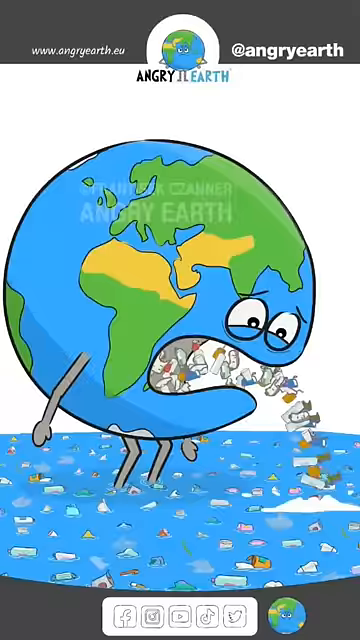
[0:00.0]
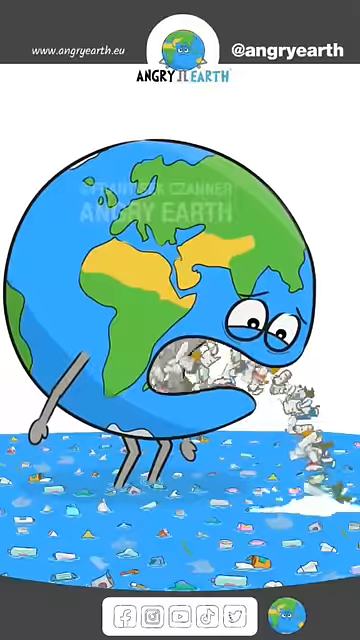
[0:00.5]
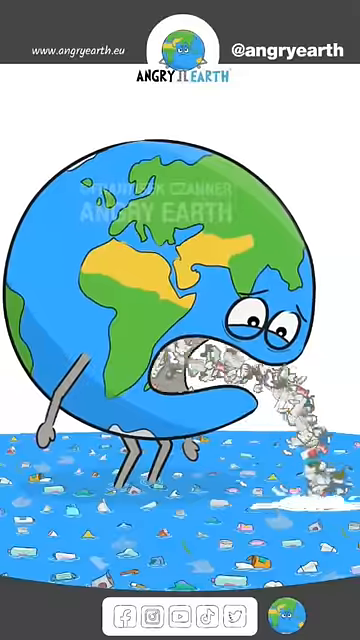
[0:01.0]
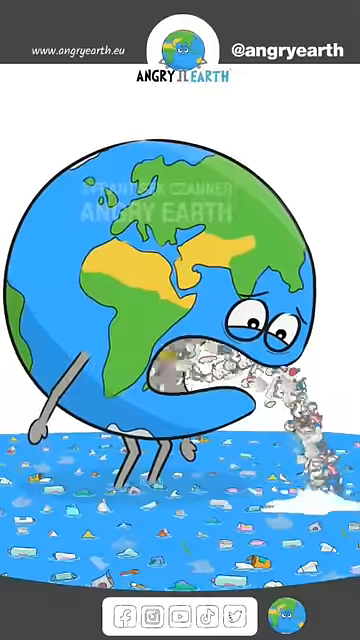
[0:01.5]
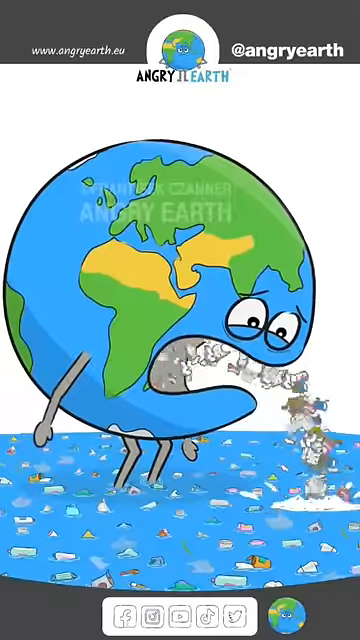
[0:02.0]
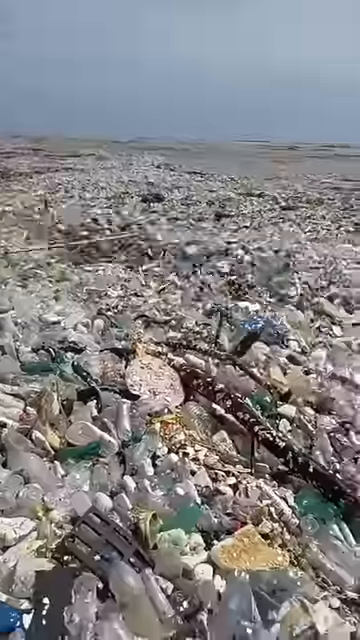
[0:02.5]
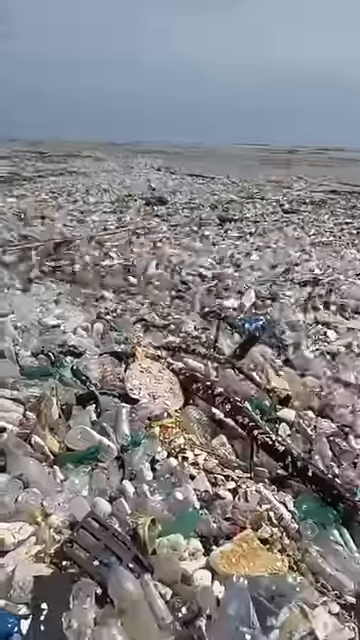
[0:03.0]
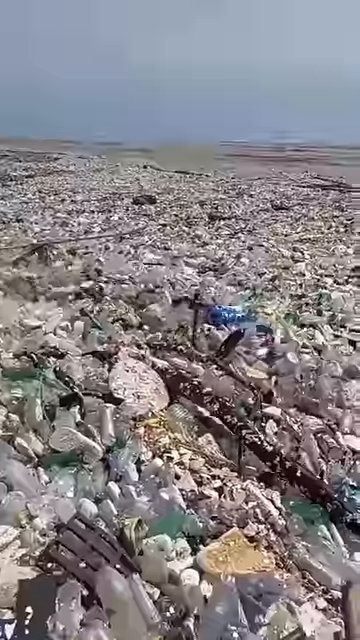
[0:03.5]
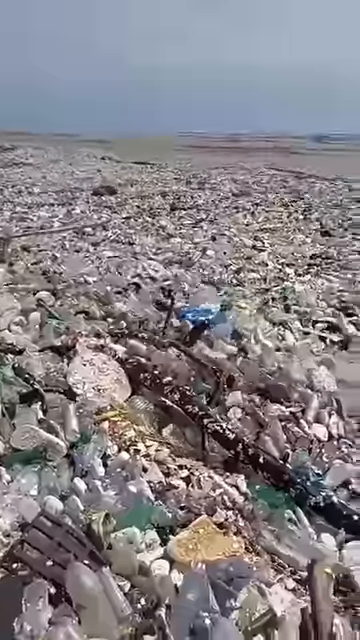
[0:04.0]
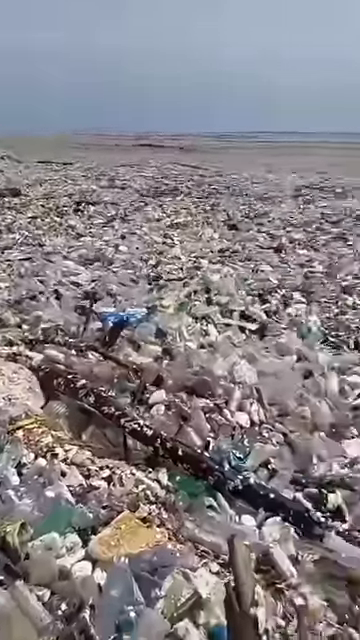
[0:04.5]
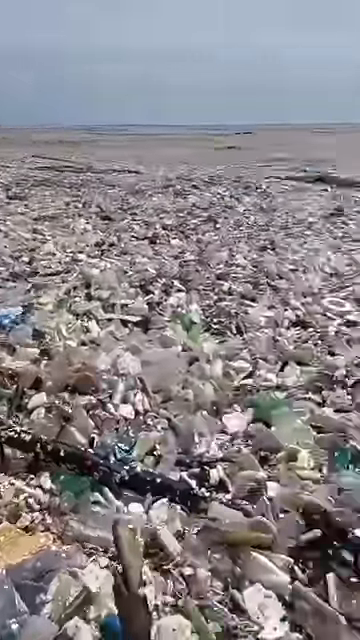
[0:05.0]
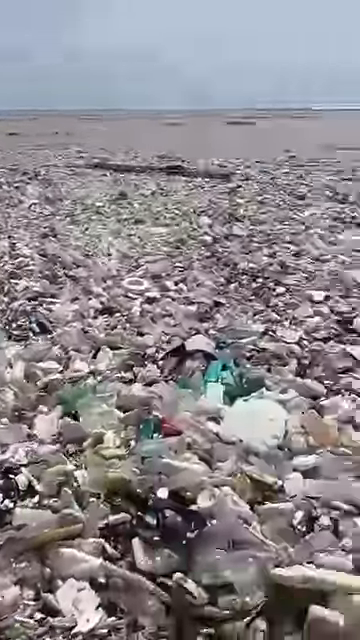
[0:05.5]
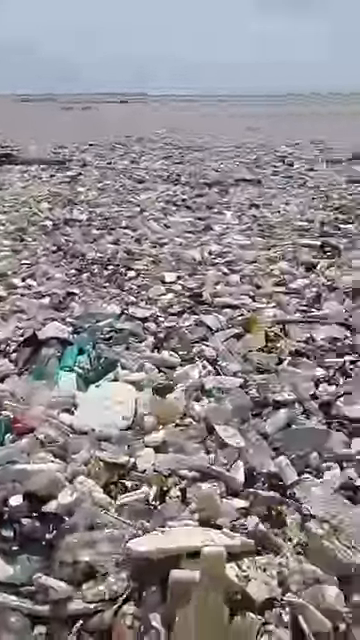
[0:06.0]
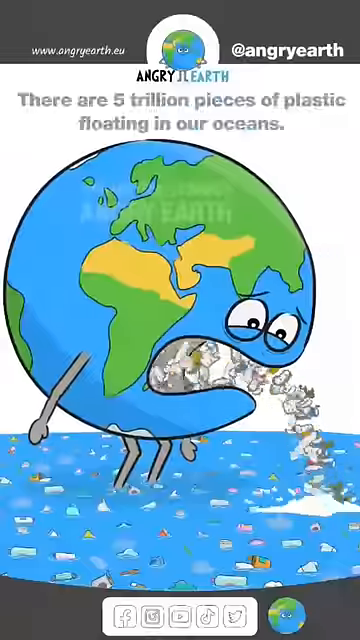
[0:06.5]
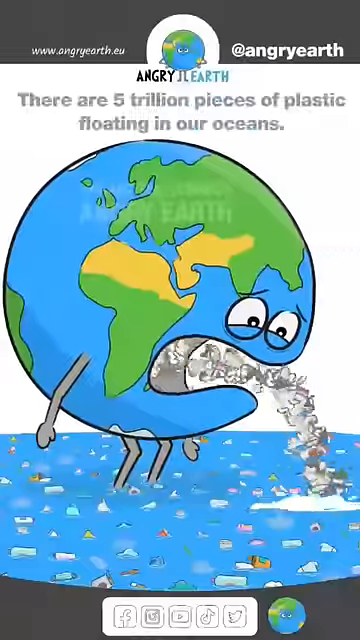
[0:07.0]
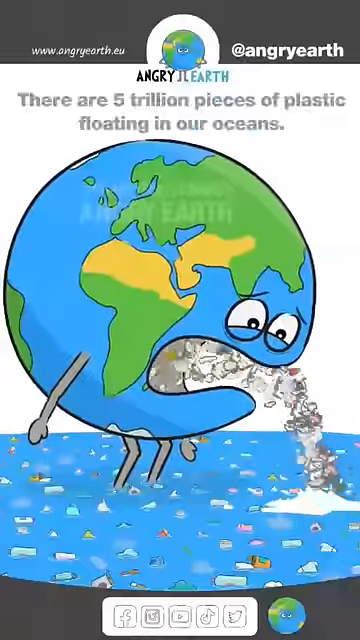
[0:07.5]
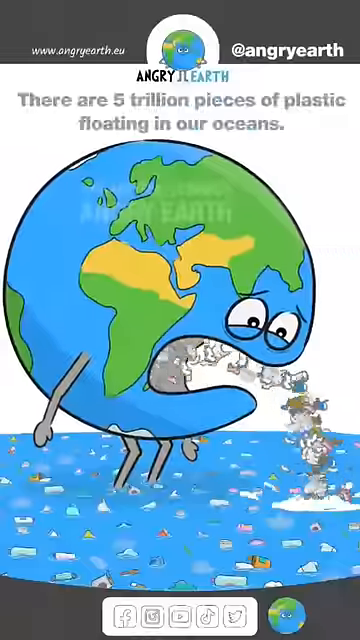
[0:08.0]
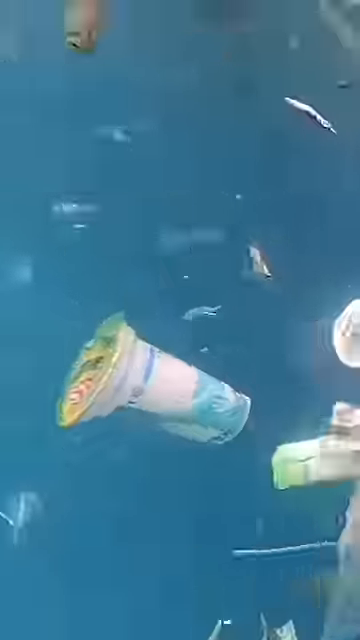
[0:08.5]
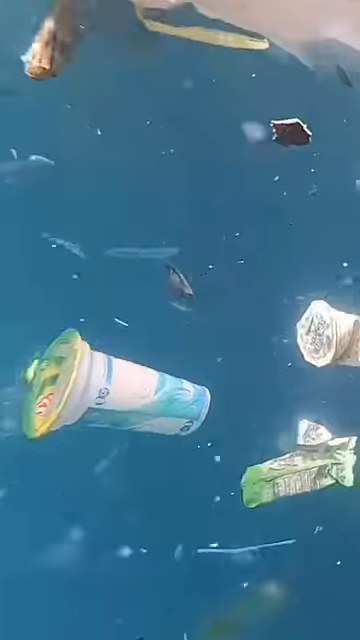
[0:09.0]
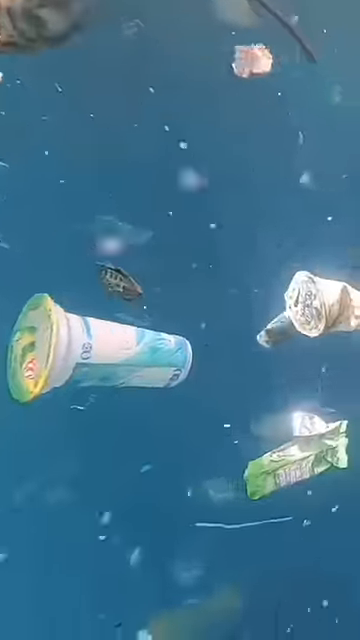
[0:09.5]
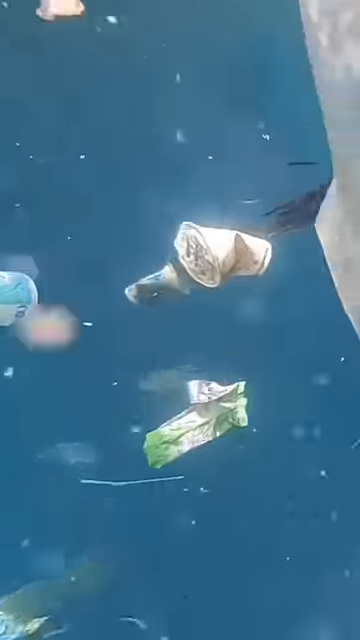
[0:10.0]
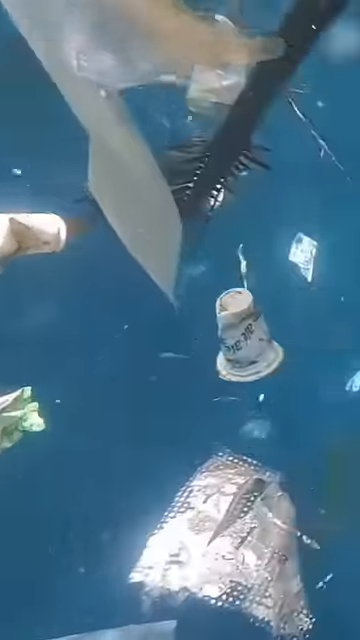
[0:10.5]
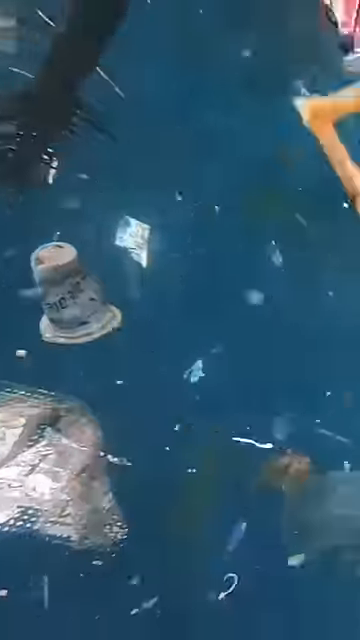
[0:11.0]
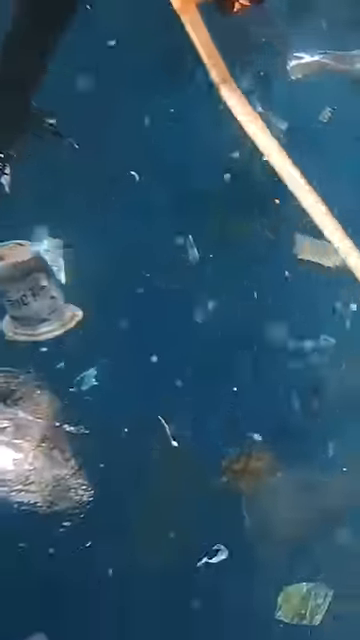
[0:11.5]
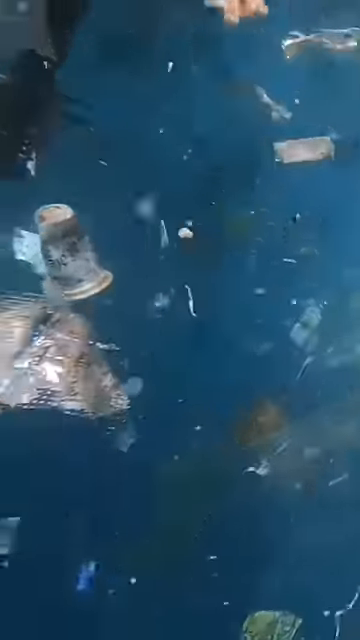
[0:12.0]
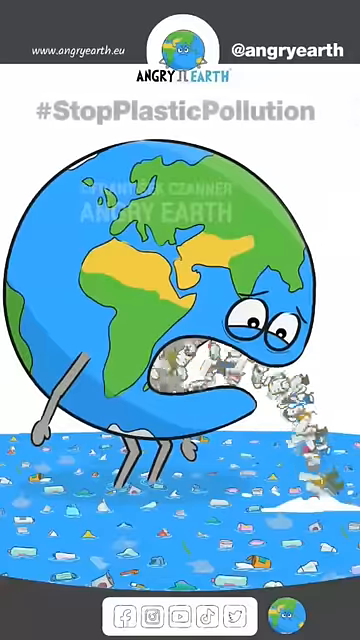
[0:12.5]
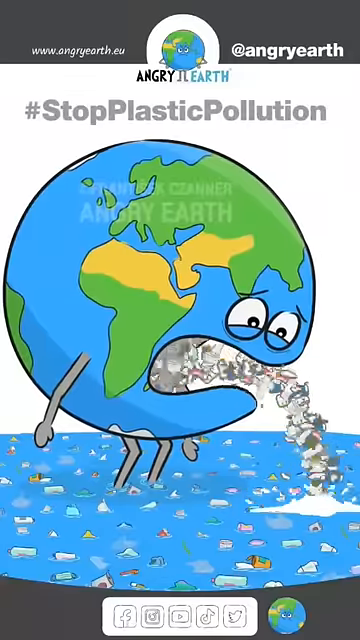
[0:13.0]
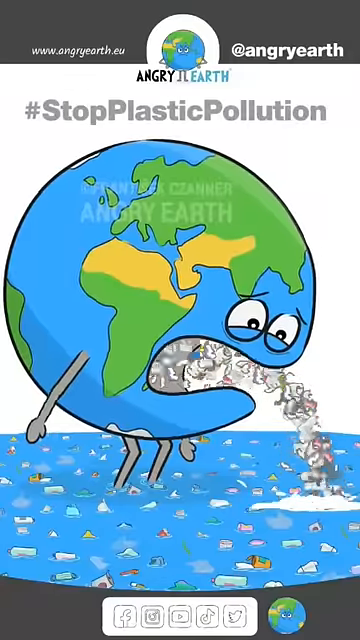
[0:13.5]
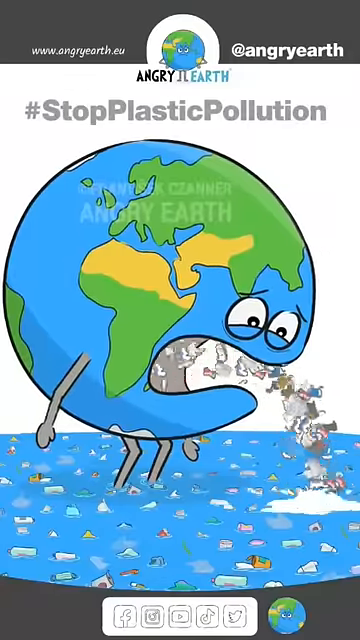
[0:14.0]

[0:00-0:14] In an animated opening, a cartoon version of the world with arms, legs and eyes is shown getting sick, vomiting litter, trash and debris into the water. The video then shows the real version: debris spilled all over the earth. On-screen text reads "#stop pollution" and "there are five trillion pieces of plastic floating in our oceans," followed by "stop plastic pollution" with a hashtag. The video is watermarked "angry earth," and a logo of the earth with an angry face is in the bottom right corner. It is a pollution ad from angry earth, warning to stop pollution and about what pollution does to the earth.